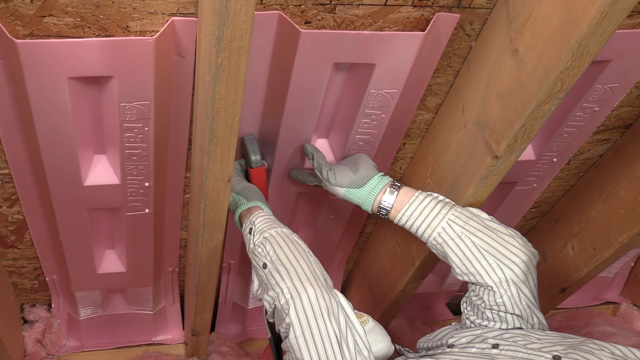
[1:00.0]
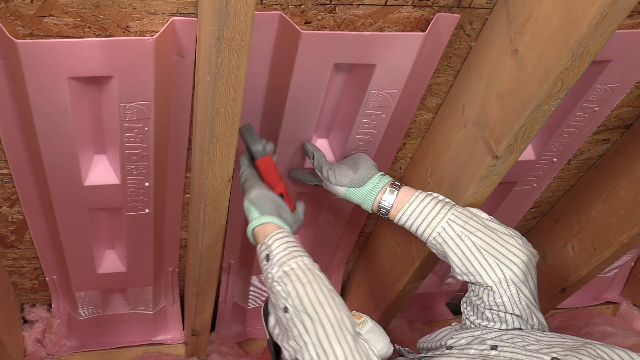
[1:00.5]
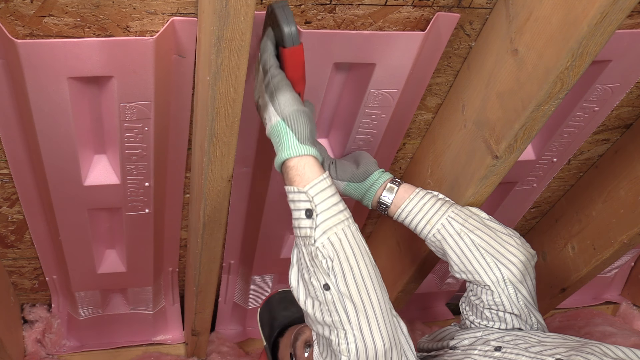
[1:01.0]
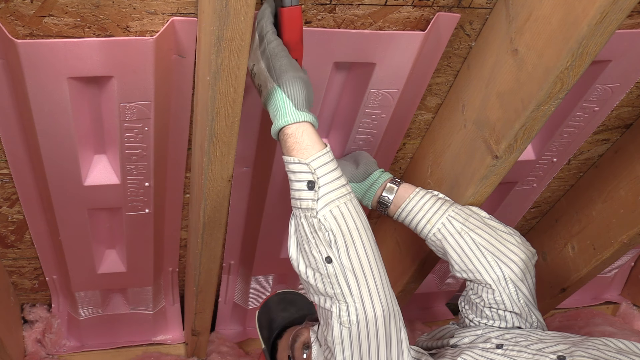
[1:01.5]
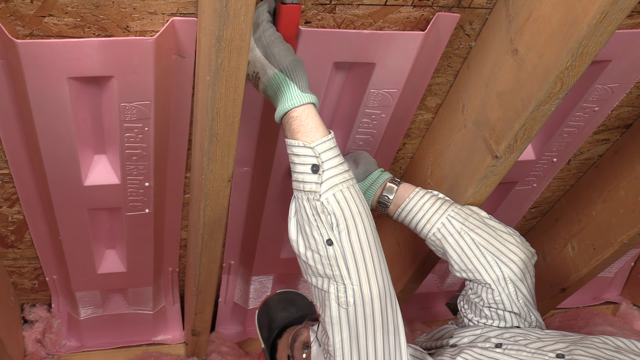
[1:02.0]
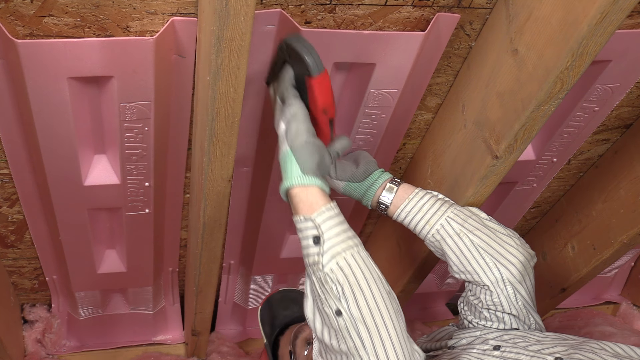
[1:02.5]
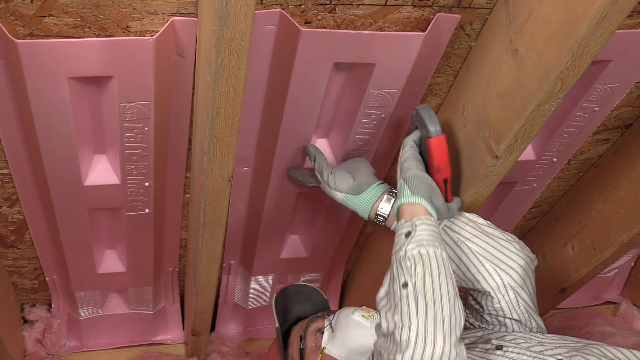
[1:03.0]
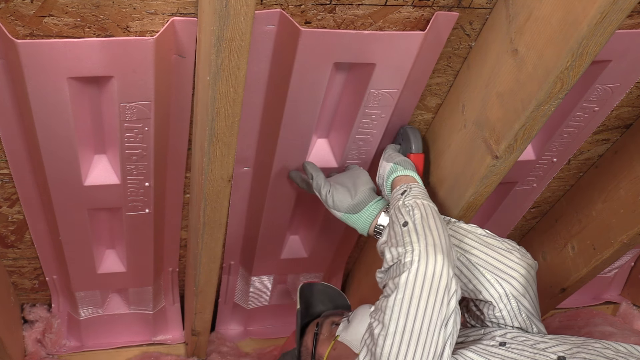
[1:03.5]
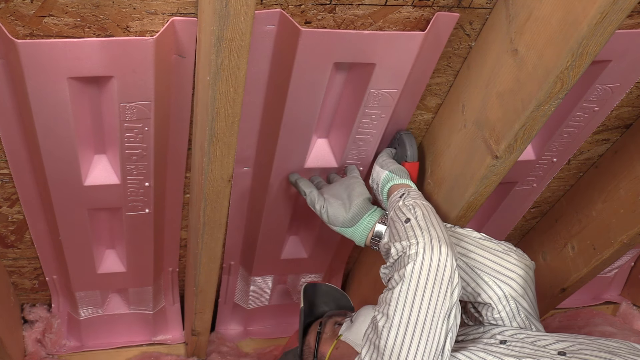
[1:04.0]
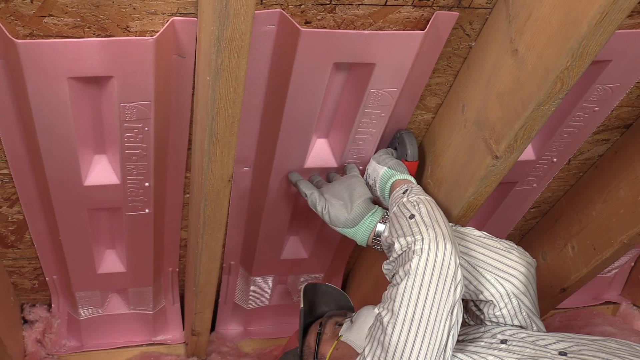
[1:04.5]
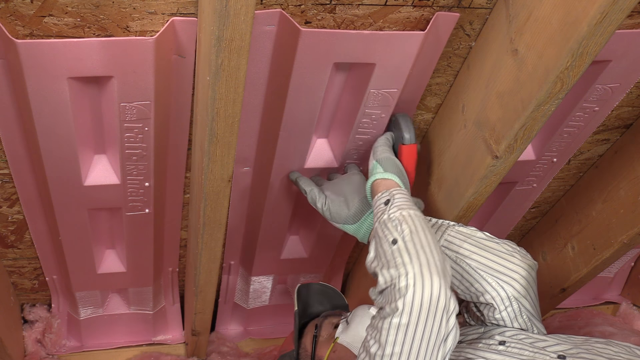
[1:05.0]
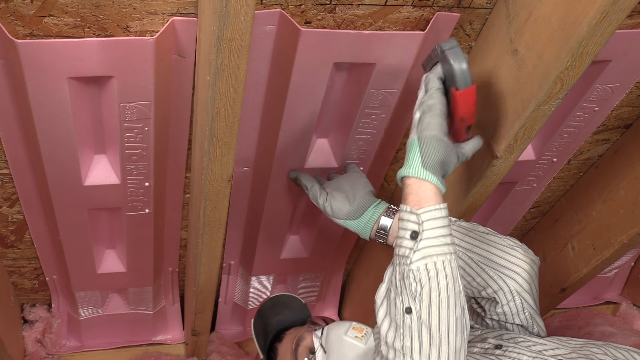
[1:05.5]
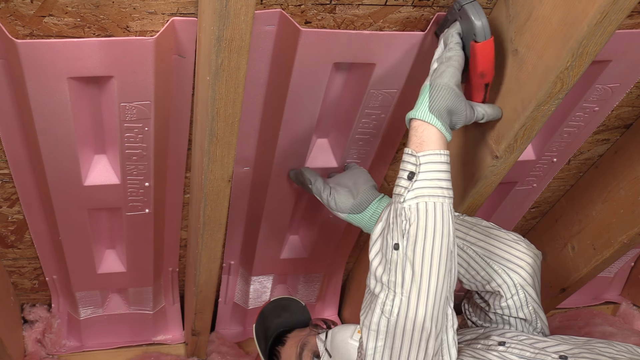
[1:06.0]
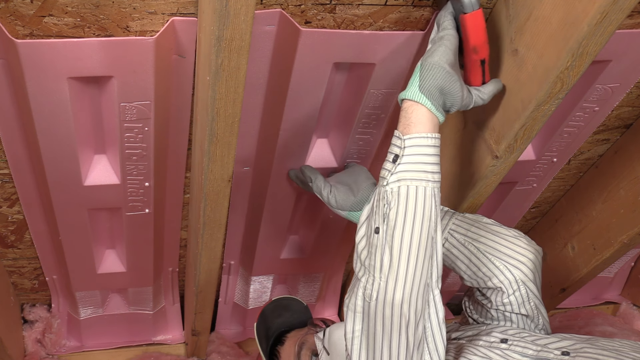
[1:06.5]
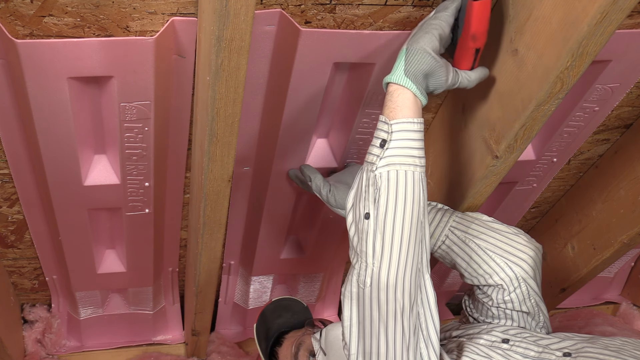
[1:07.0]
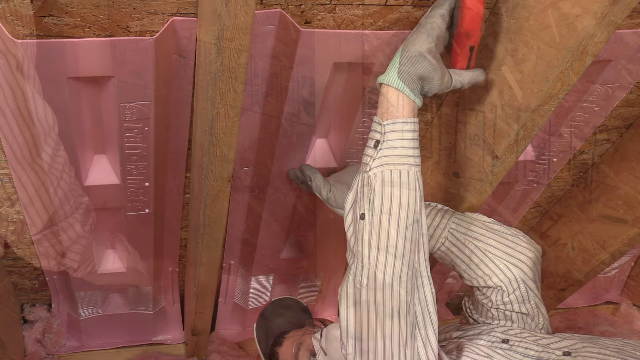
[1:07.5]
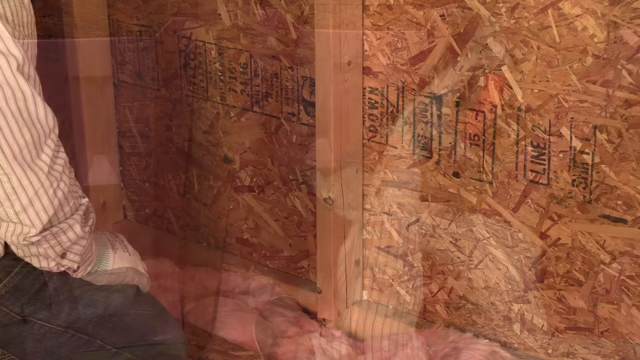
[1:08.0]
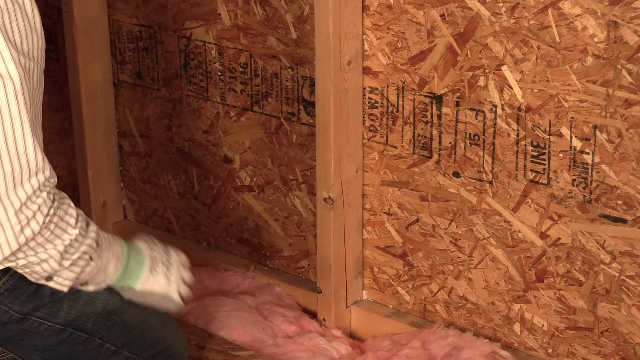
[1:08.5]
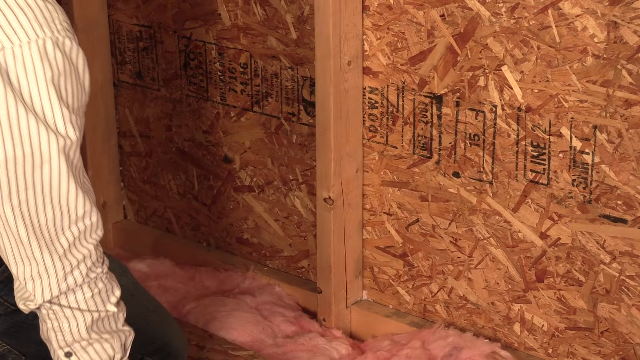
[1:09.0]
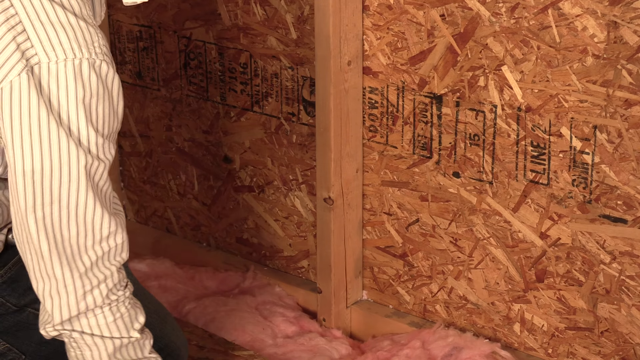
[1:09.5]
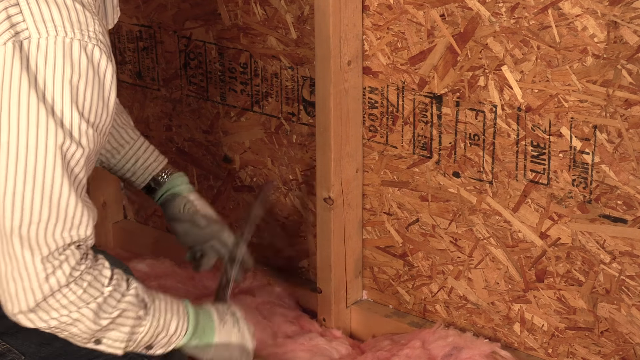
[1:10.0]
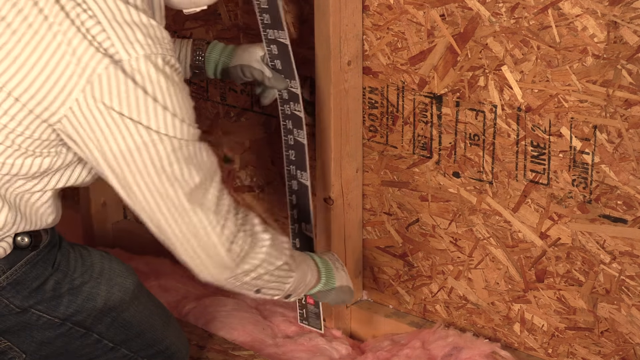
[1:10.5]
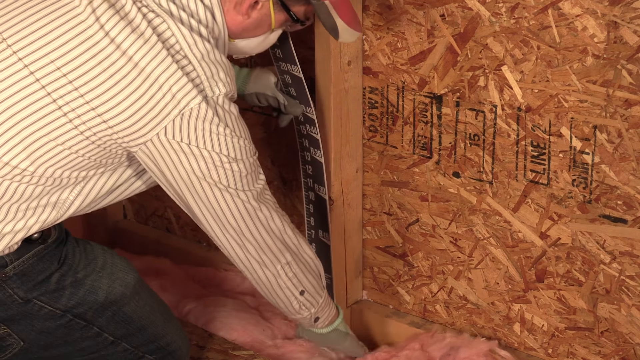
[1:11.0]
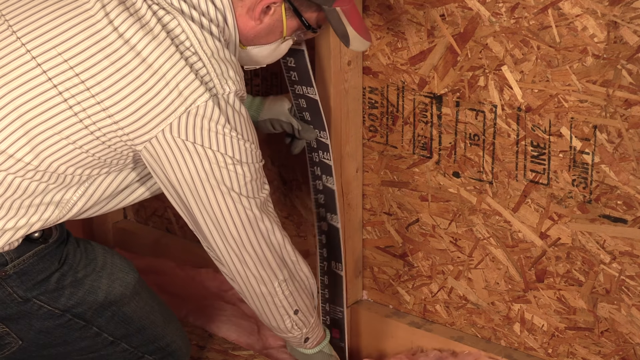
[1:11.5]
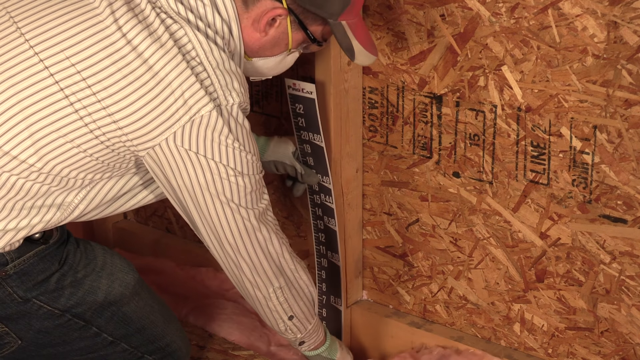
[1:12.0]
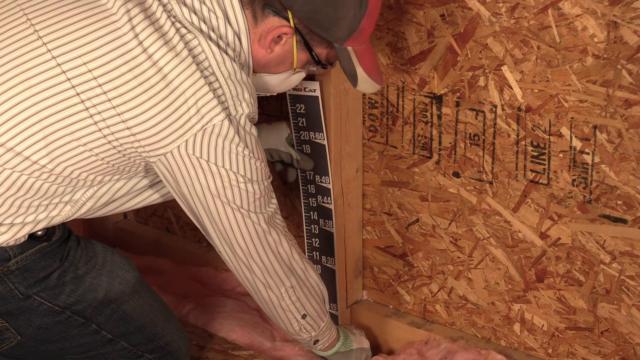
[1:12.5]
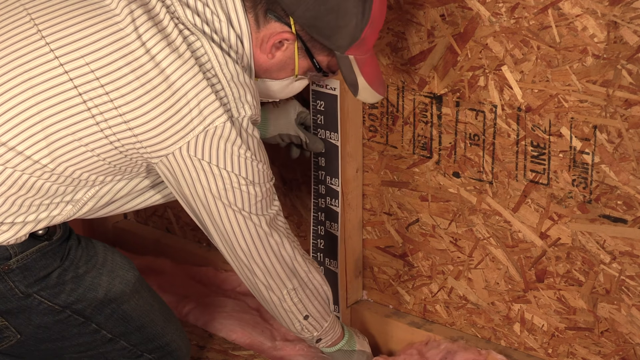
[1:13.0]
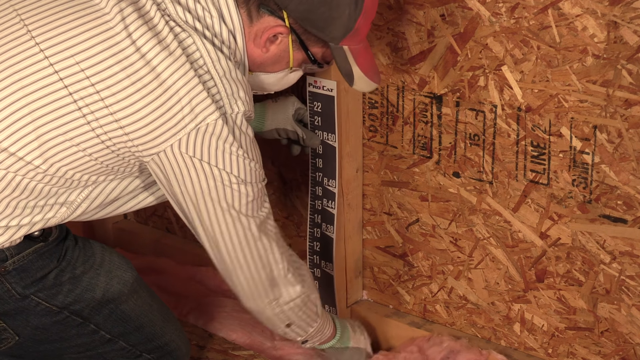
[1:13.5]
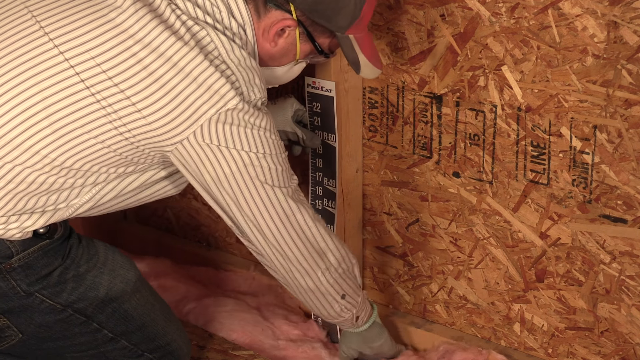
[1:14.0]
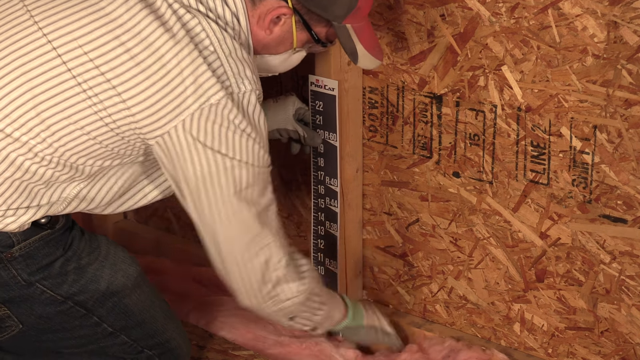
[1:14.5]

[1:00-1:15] The man, in black jeans and a gray and white vertically striped shirt, lies on his back inside the attic, stapling pink material against the slanted interior of the roof between the boards. He wears glasses, a face mask, a billed cap, and gloves. The scene changes and he is now on the left-hand side, bending over or on his knees, putting a tall black and white thing that looks like a measuring paper against the wall behind where he put the insulation, possibly to measure the insulation's depth. He puts it down behind the insulation against the wall, pushes it down so that it meets the floor, and then kind of pushes the insulation down.